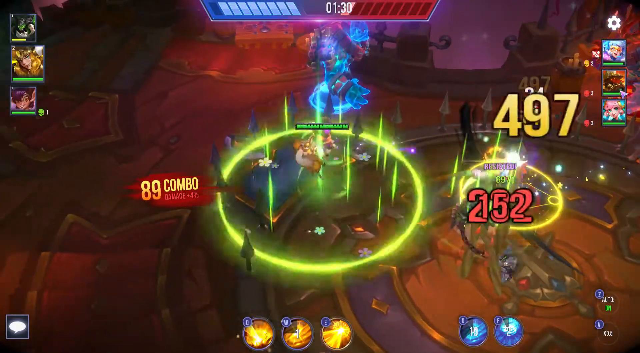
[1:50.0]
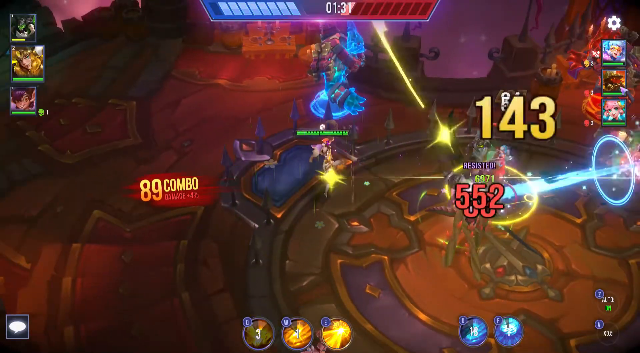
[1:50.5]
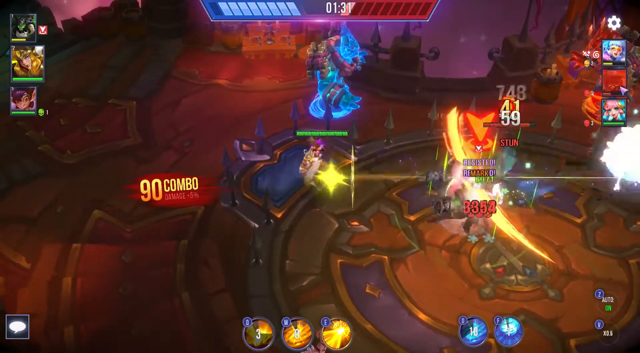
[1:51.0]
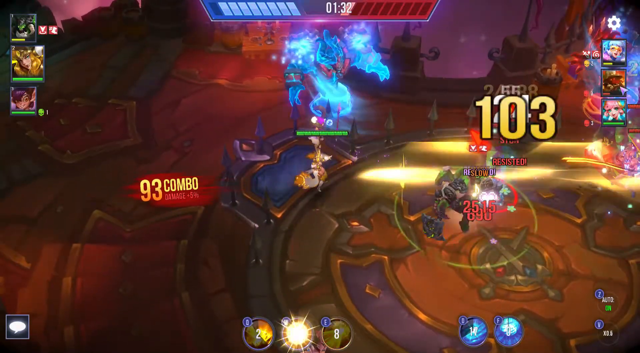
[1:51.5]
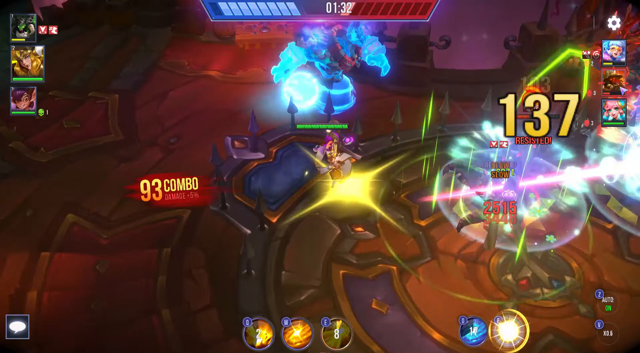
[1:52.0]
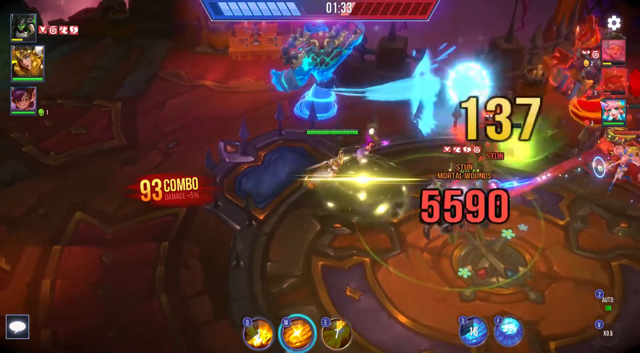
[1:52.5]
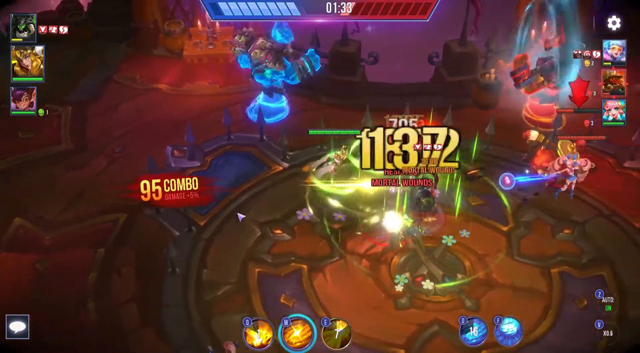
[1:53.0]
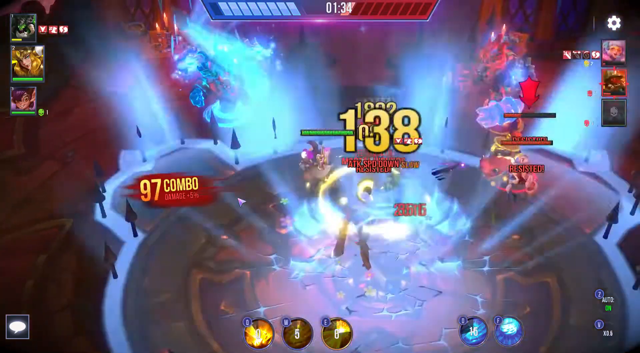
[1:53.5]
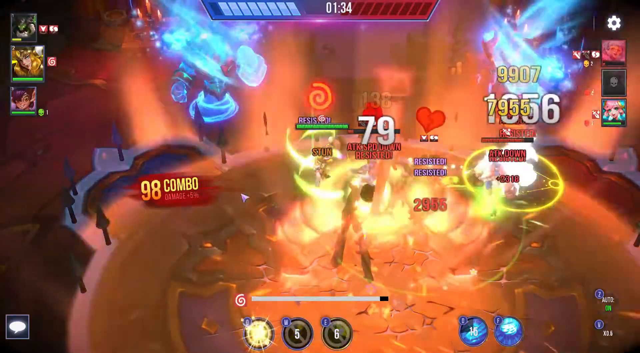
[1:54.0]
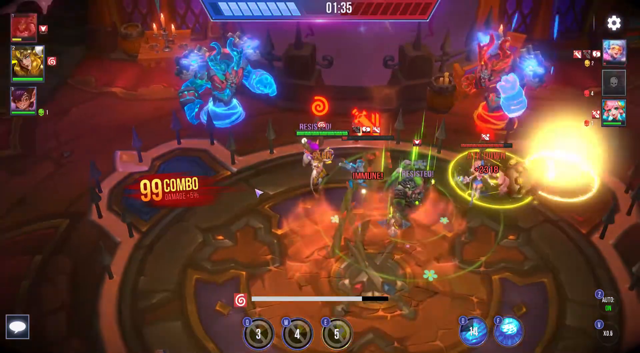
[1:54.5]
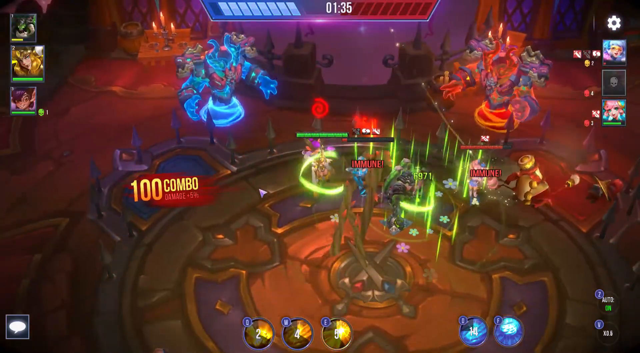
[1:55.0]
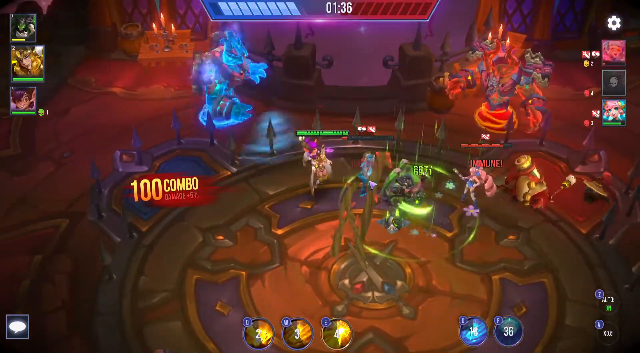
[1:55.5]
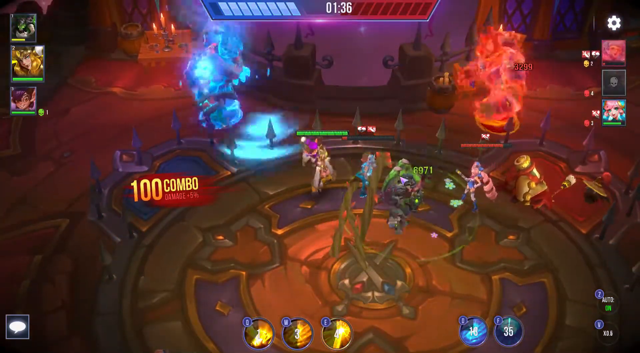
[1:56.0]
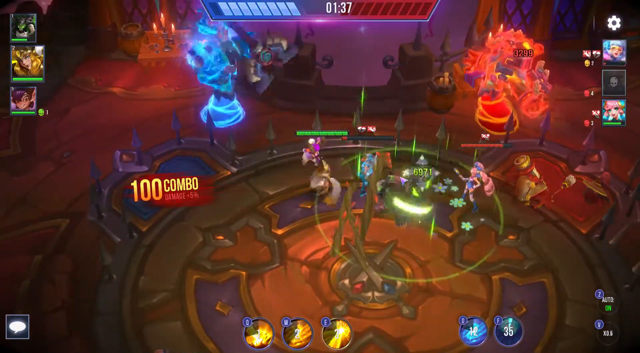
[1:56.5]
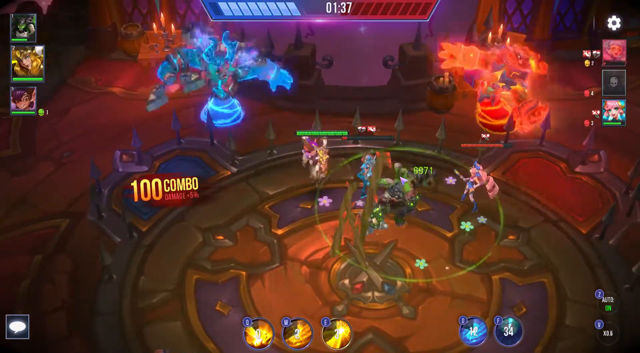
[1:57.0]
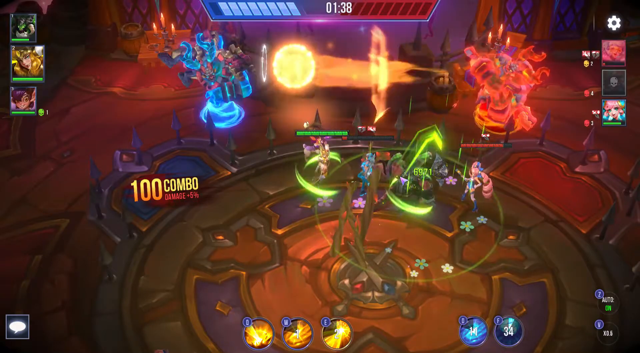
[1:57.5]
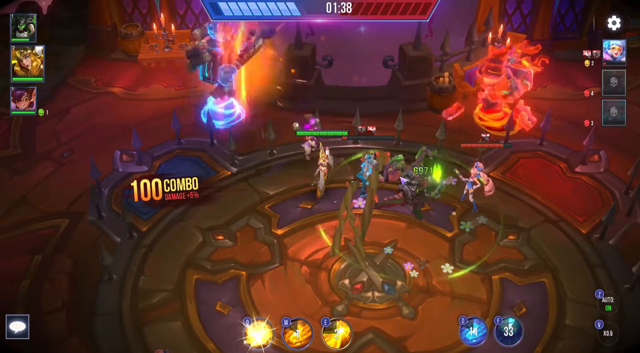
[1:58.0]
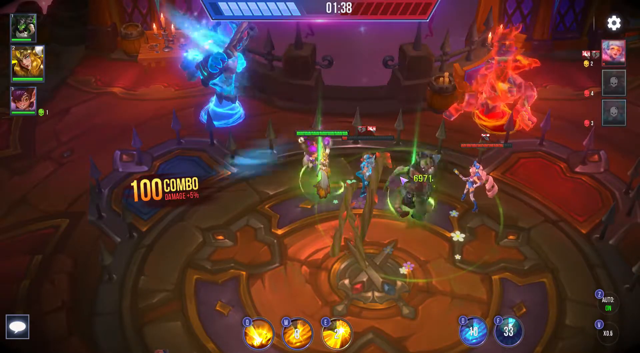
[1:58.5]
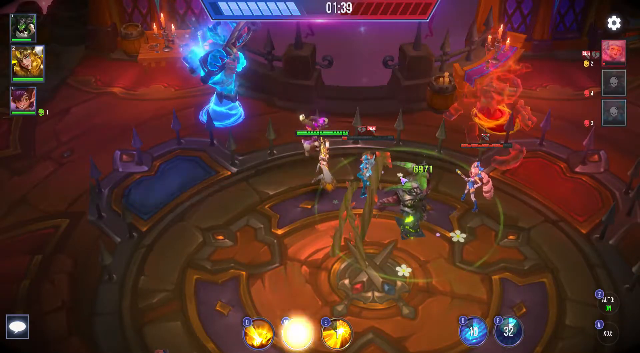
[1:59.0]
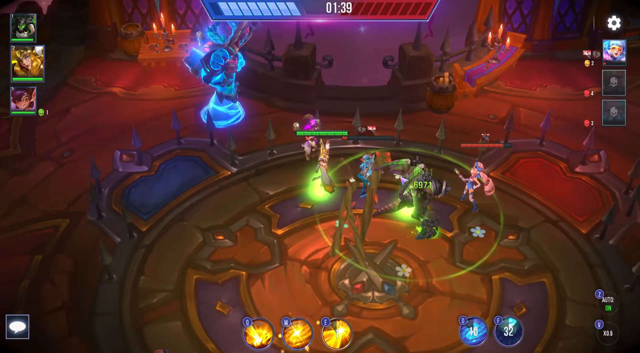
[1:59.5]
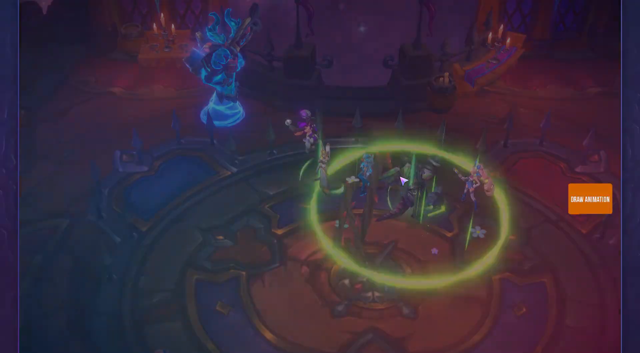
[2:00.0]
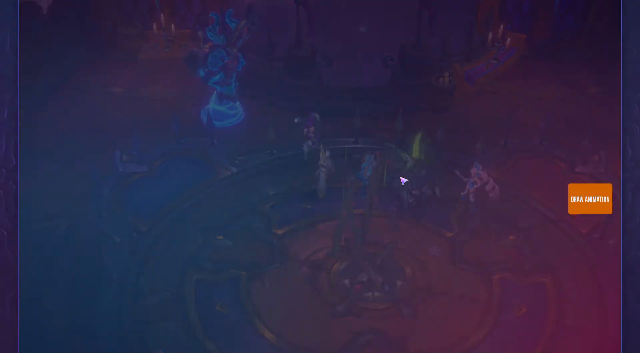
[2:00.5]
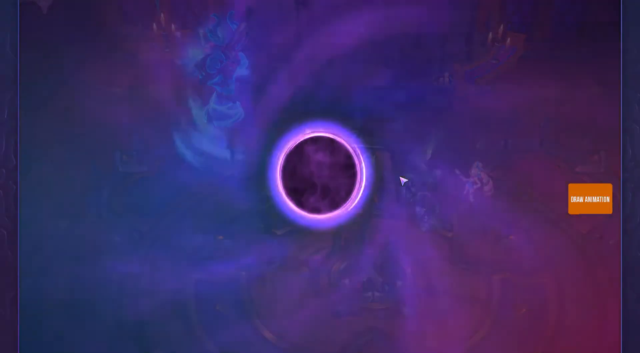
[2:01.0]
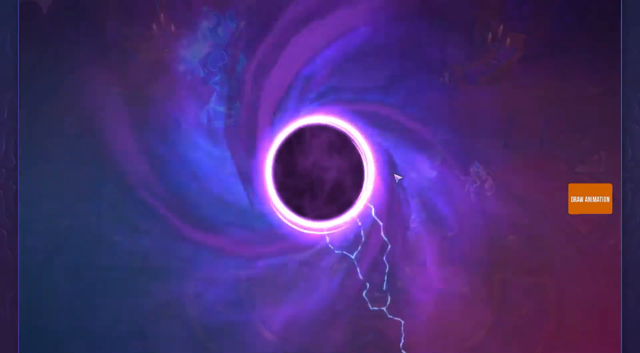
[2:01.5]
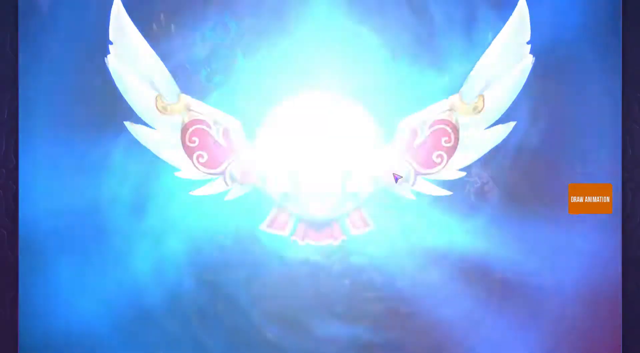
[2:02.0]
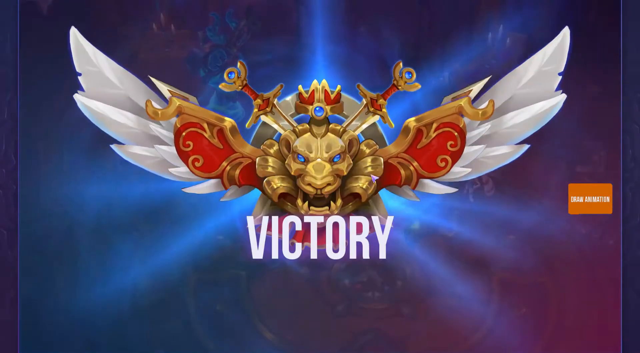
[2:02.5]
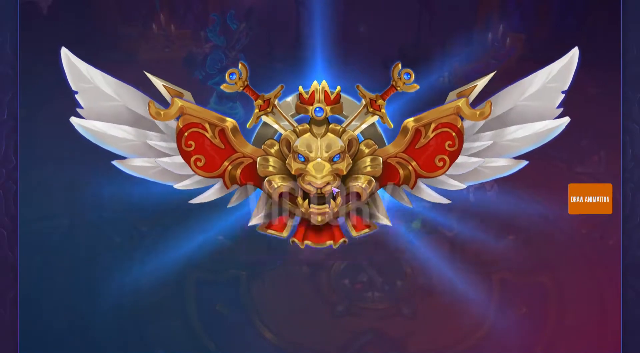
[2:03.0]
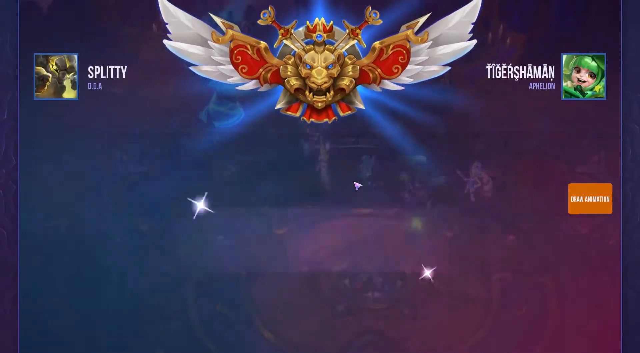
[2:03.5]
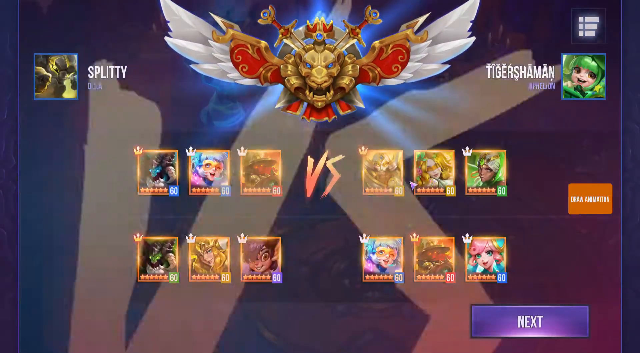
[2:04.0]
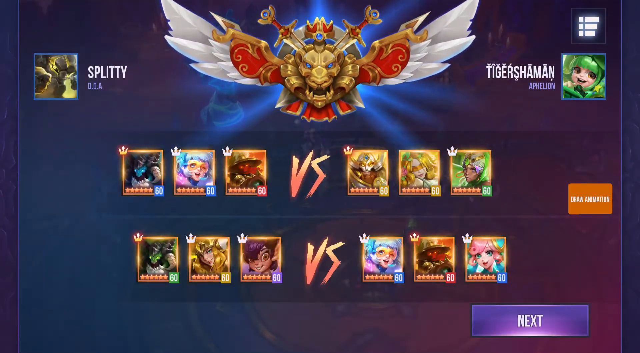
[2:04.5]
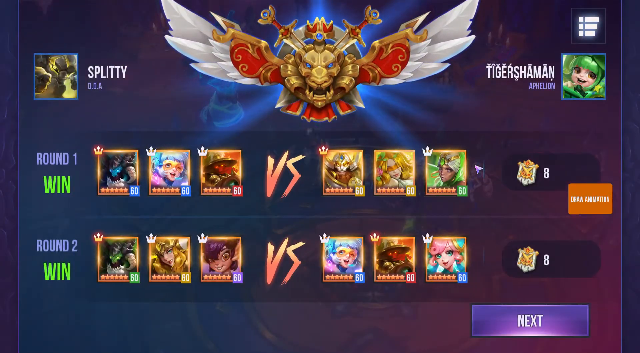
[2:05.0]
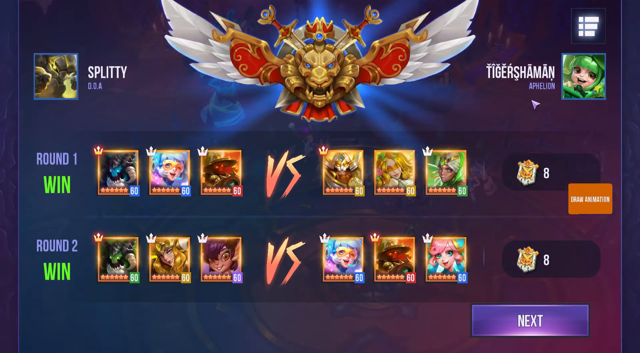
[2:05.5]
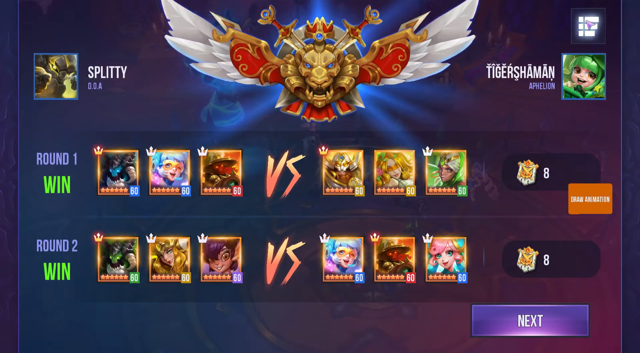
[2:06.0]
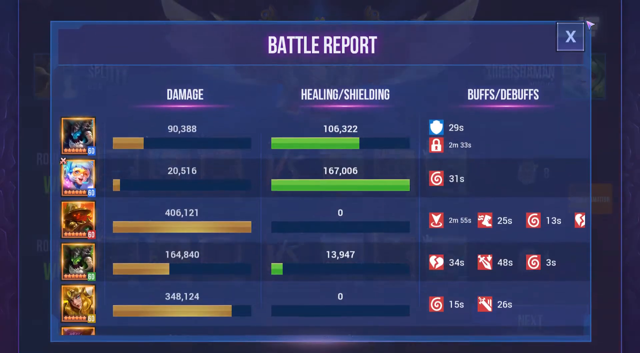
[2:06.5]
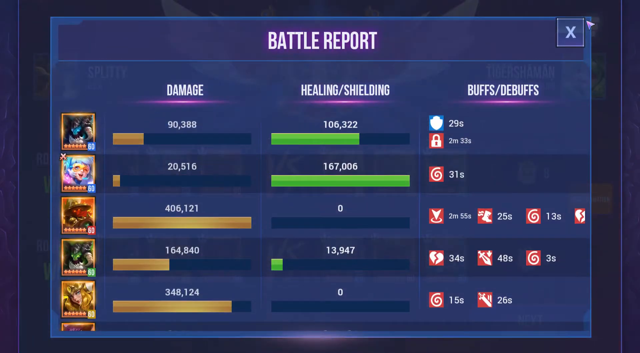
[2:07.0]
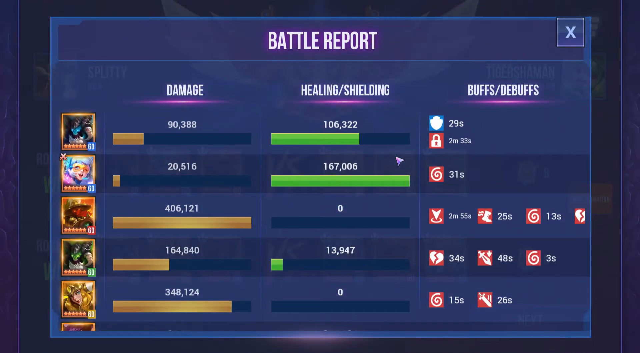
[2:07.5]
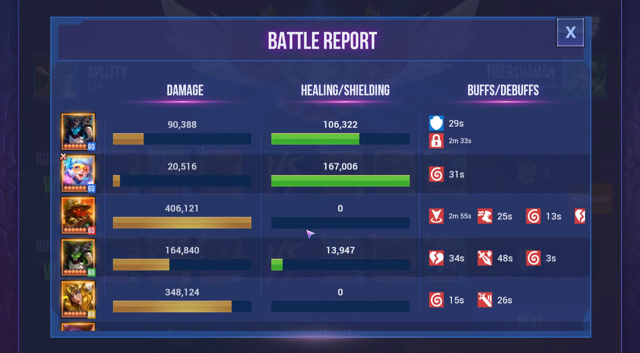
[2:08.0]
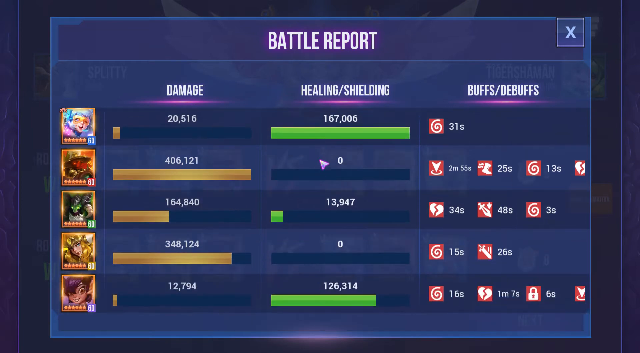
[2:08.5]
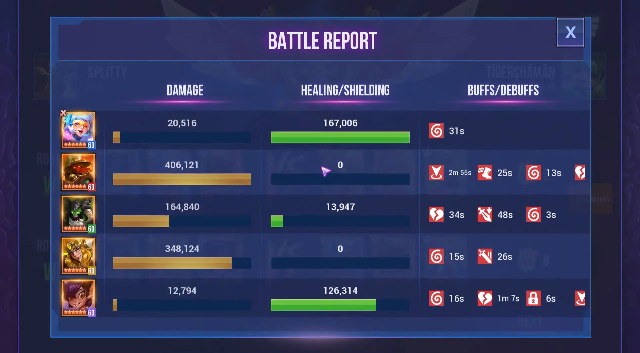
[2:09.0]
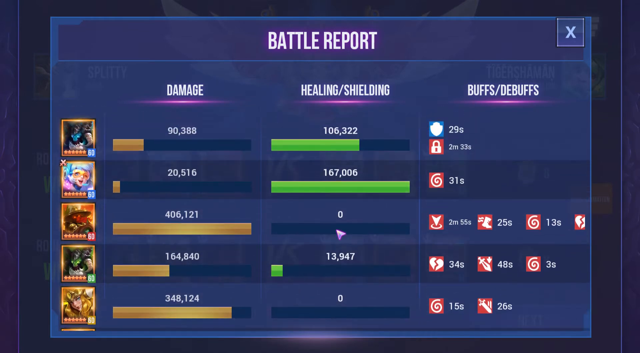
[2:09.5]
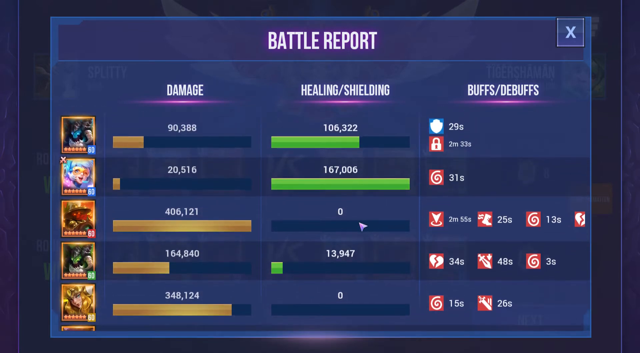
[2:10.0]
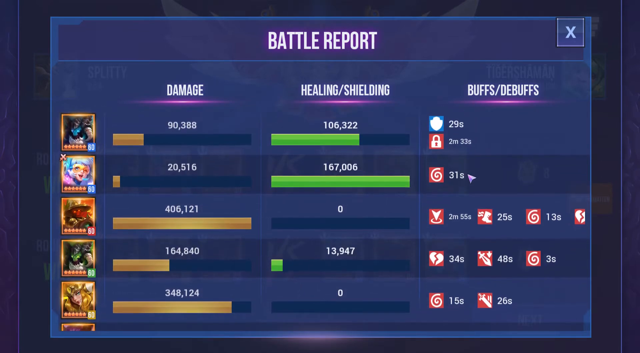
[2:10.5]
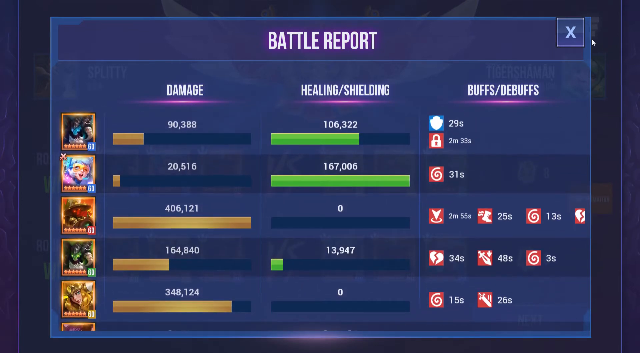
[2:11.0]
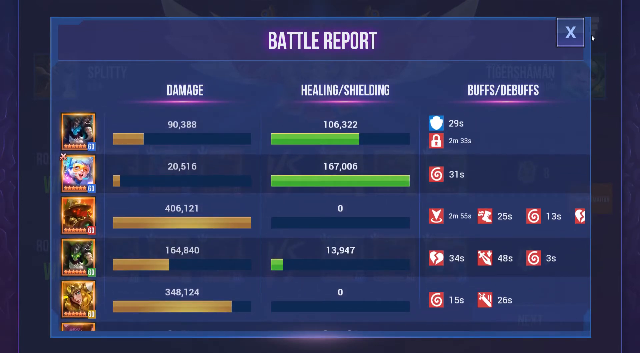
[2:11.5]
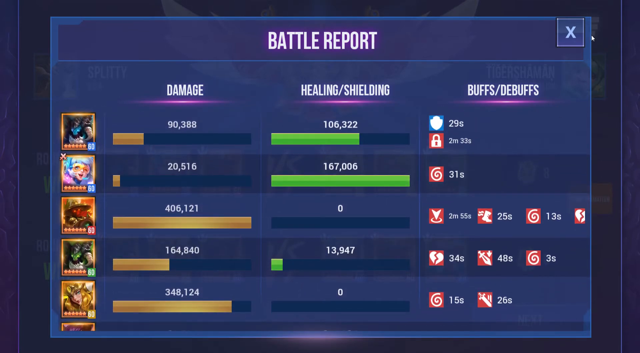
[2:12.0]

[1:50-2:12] A streamed video game begins with multiple characters apparently playing each other in an arena of fiery red brick, with a big circle in the middle big enough for all the characters to fight and run from one side of the circle to the other. There are flames in the background. It seems to show perhaps five or six characters, with avatars three on each side. Because the characters are shooting energy beams through their hands, not everyone's face can be seen. After about five or ten seconds, another page appears, apparently after reaching a different level. This page says "victory" and shows what looks like two rounds, with three avatars on each side. A battle report follows, giving damage, healing, buffs/debuffs and other information.